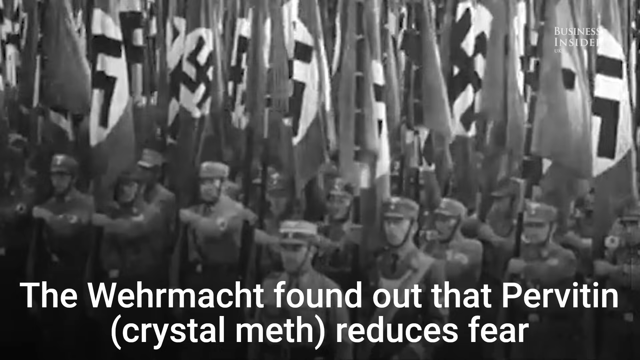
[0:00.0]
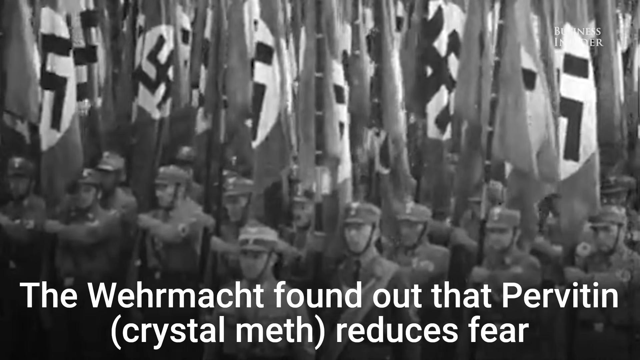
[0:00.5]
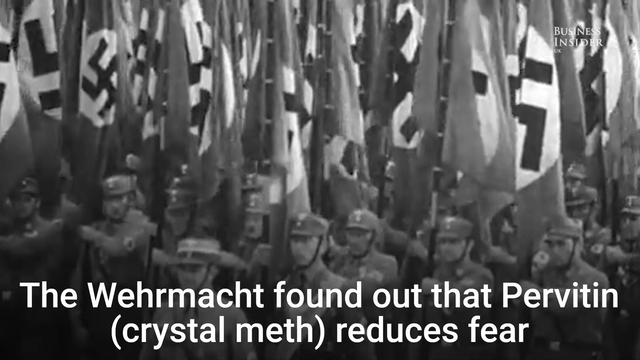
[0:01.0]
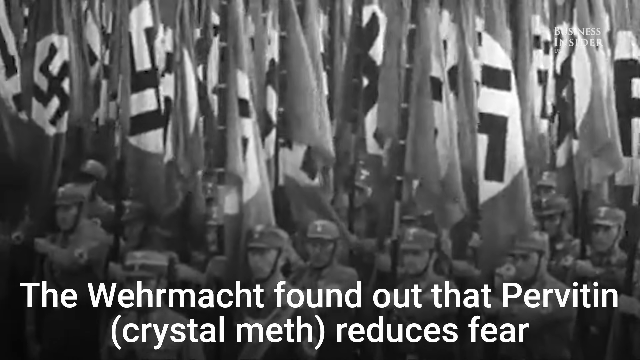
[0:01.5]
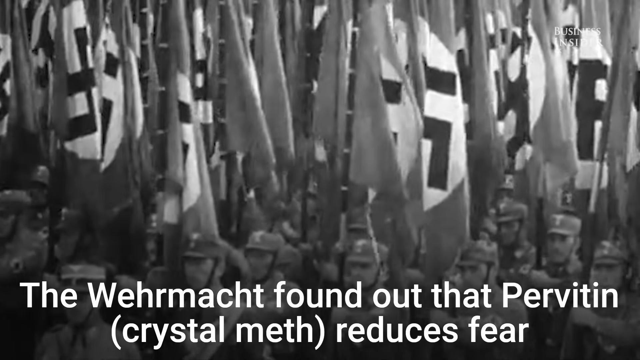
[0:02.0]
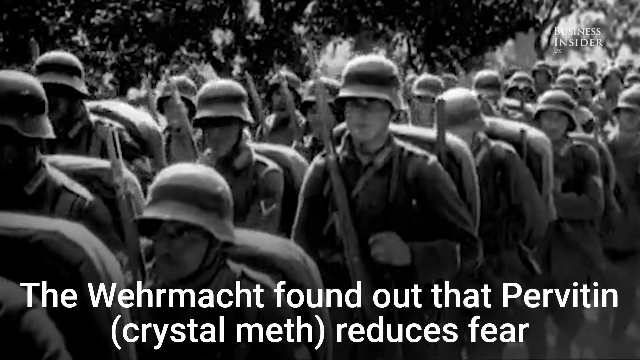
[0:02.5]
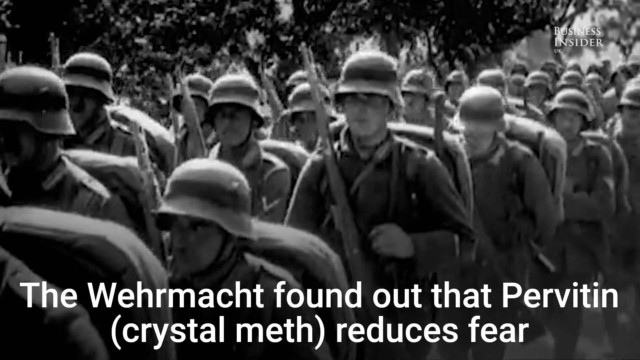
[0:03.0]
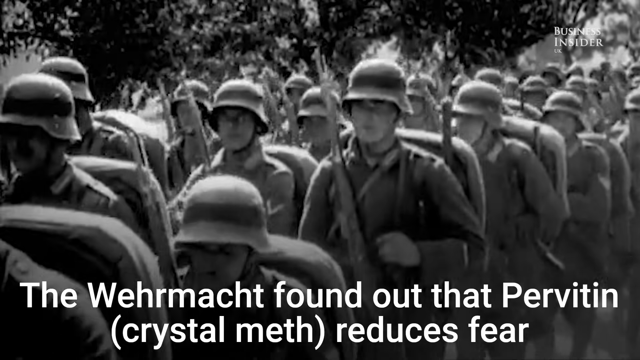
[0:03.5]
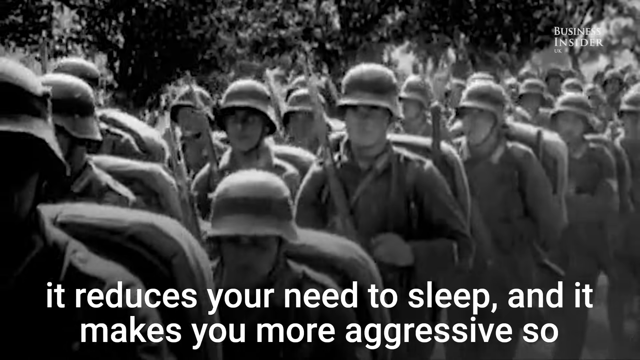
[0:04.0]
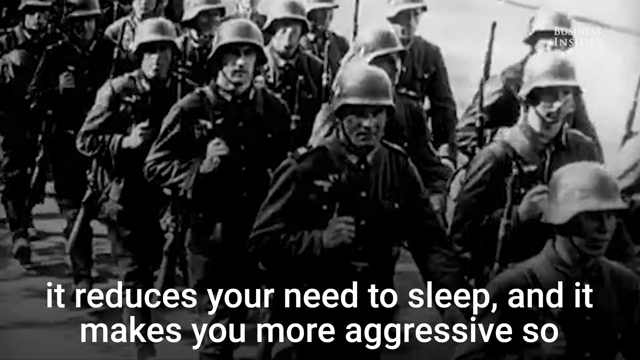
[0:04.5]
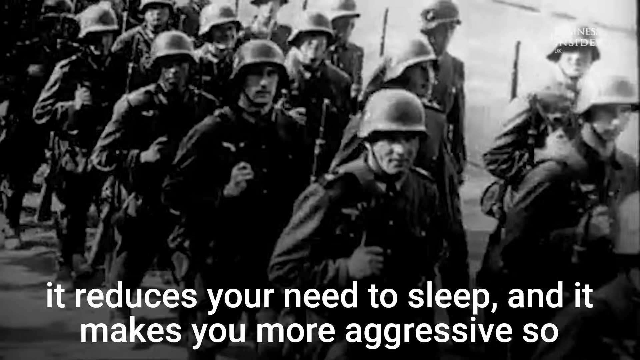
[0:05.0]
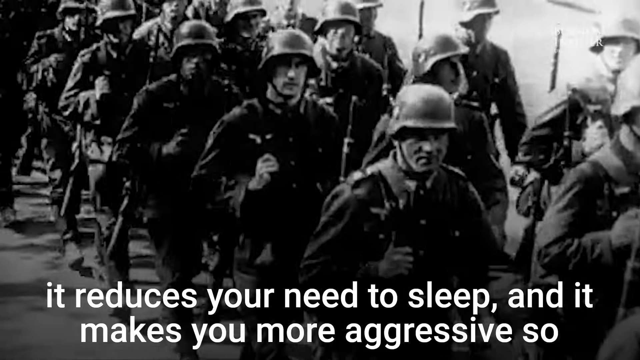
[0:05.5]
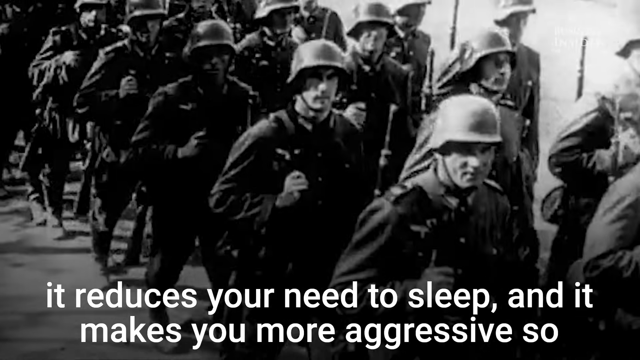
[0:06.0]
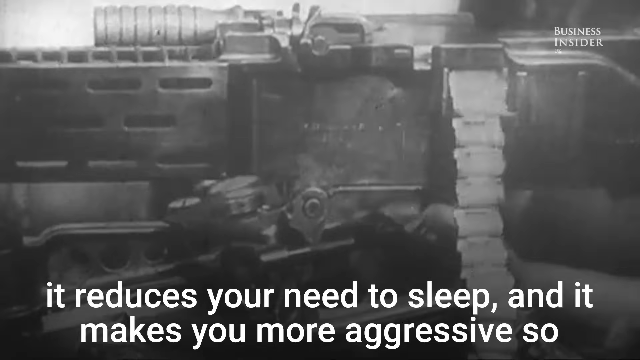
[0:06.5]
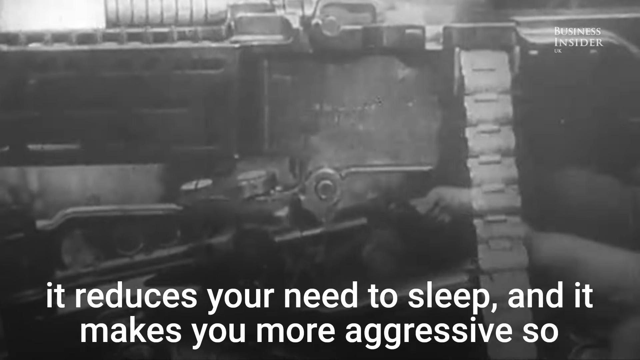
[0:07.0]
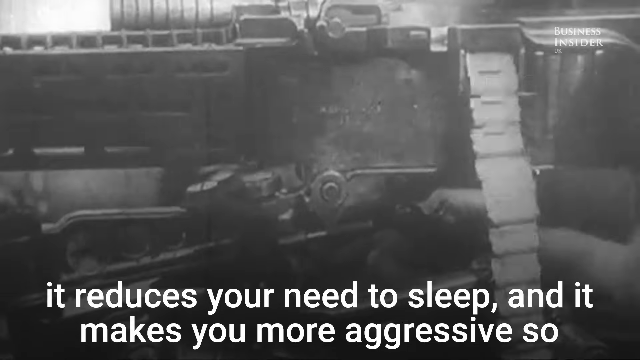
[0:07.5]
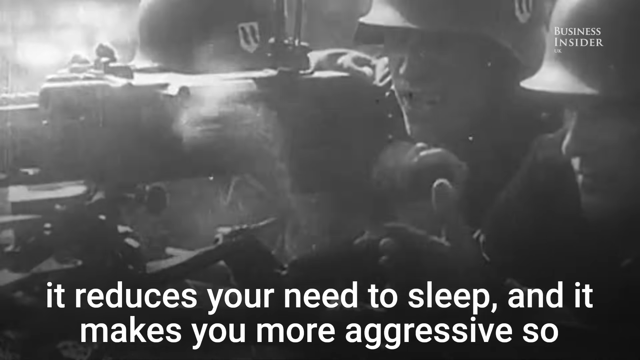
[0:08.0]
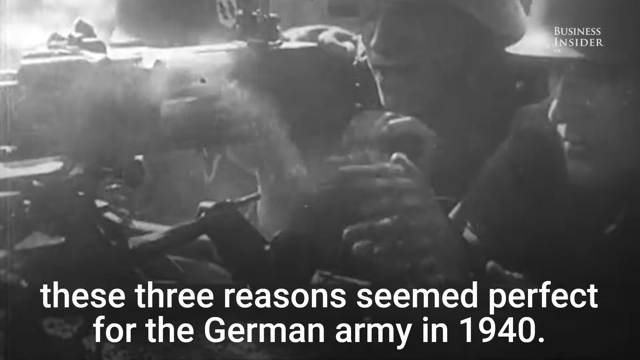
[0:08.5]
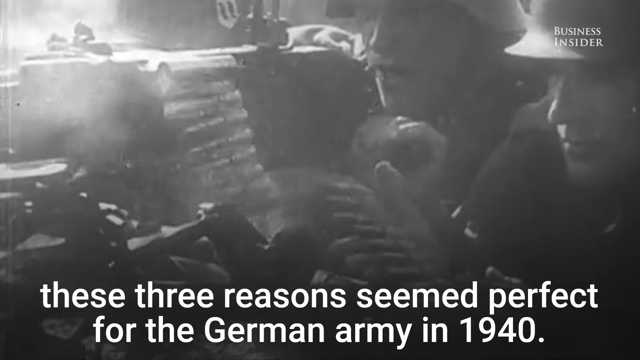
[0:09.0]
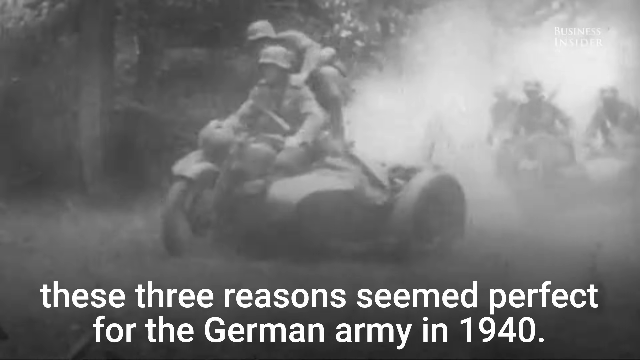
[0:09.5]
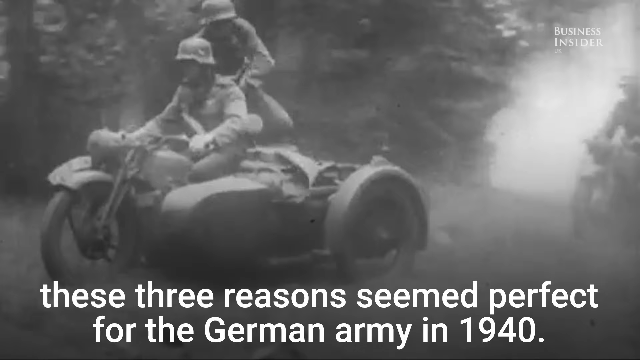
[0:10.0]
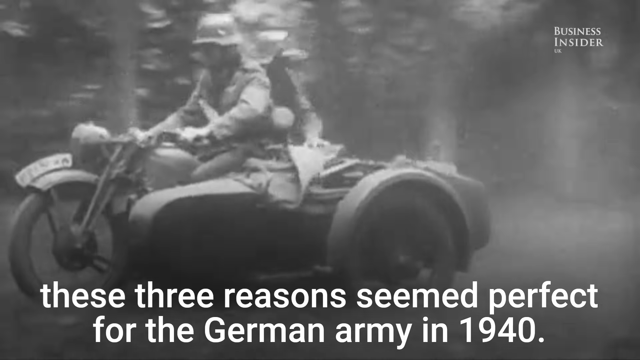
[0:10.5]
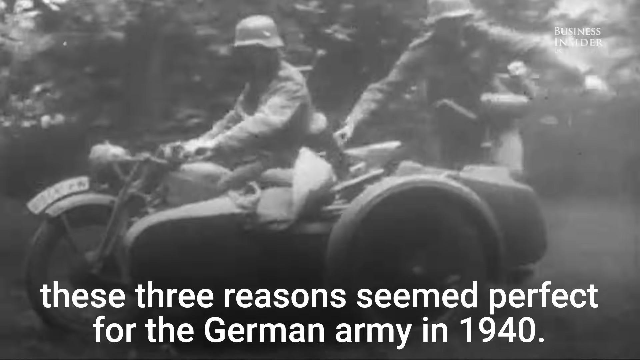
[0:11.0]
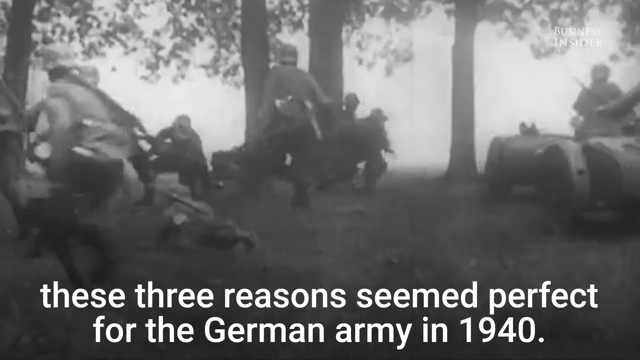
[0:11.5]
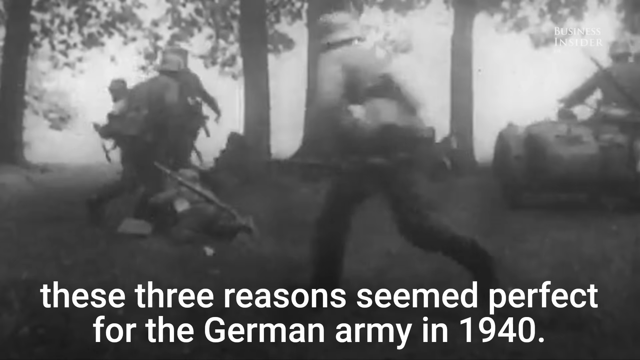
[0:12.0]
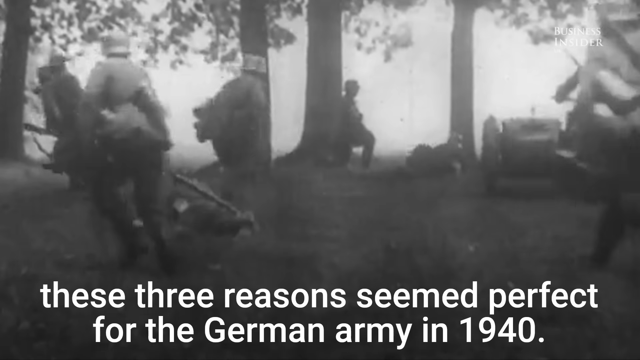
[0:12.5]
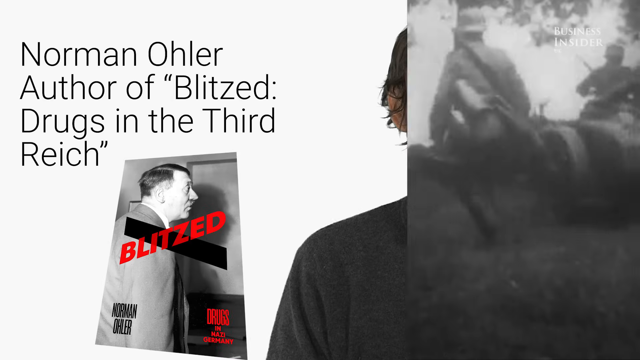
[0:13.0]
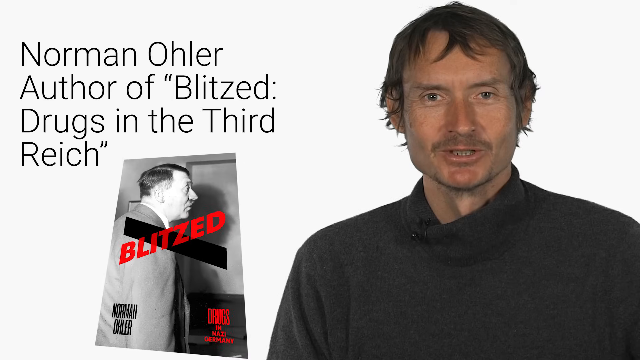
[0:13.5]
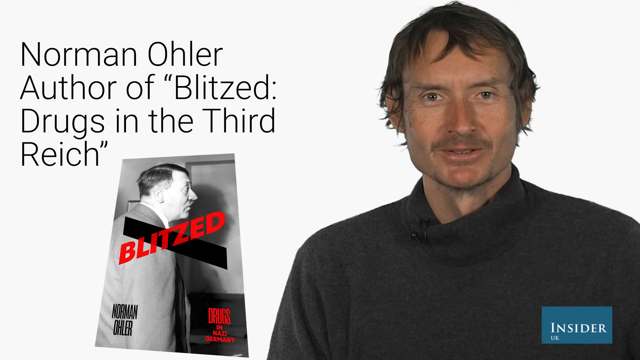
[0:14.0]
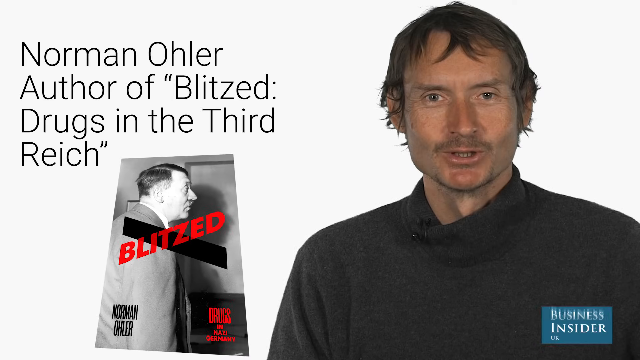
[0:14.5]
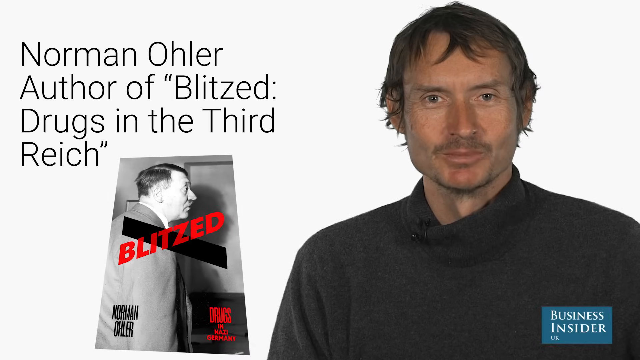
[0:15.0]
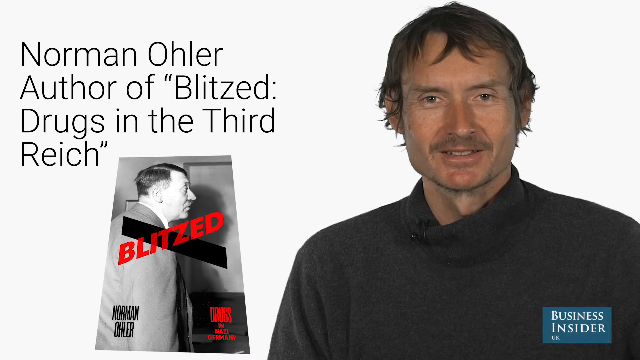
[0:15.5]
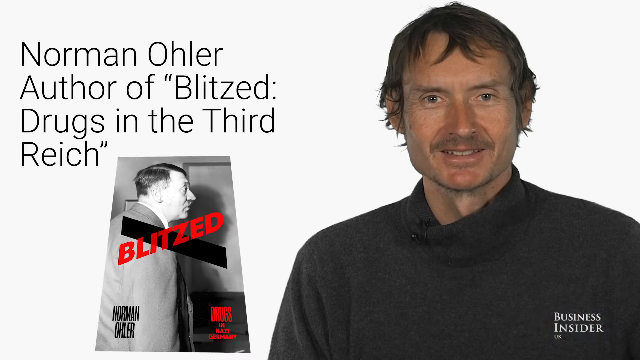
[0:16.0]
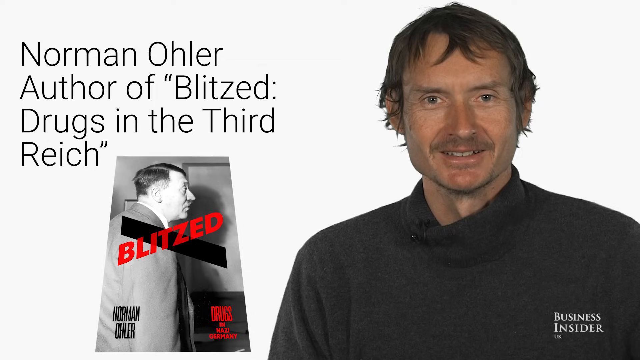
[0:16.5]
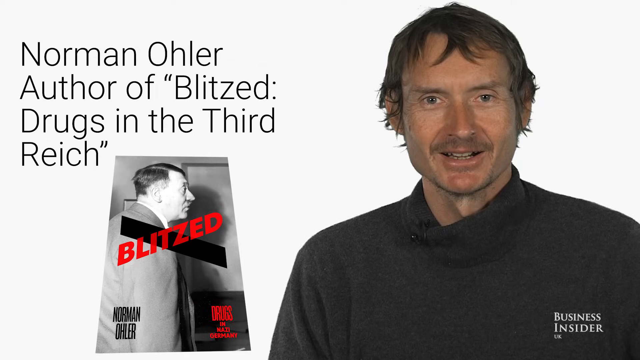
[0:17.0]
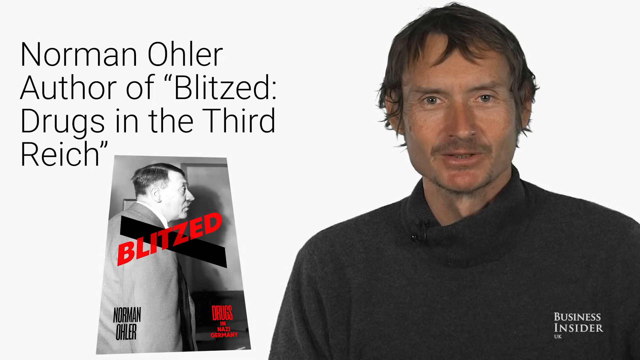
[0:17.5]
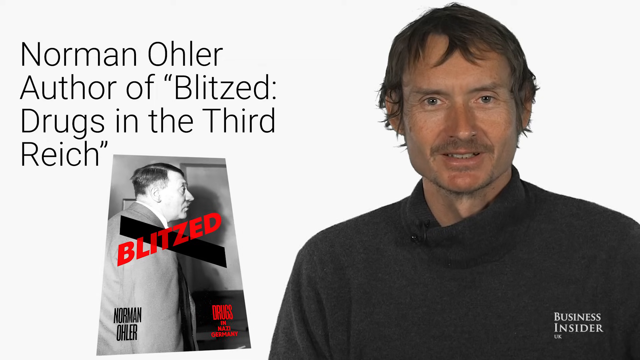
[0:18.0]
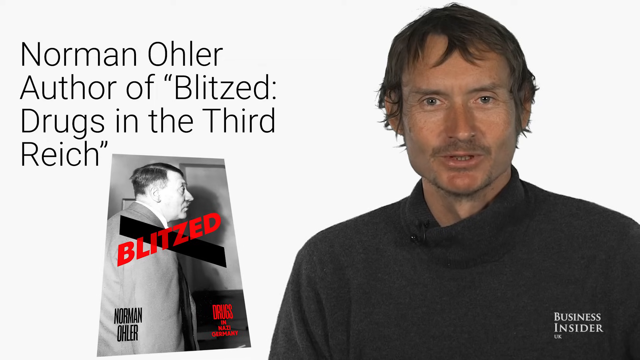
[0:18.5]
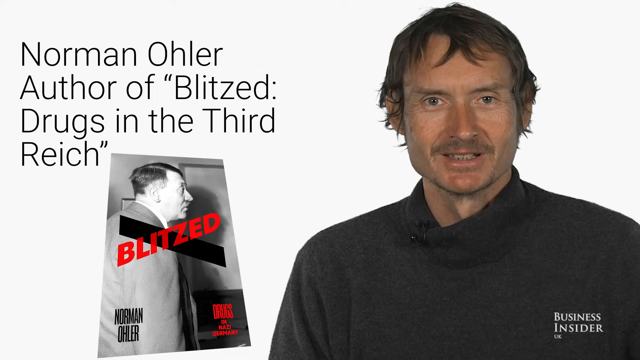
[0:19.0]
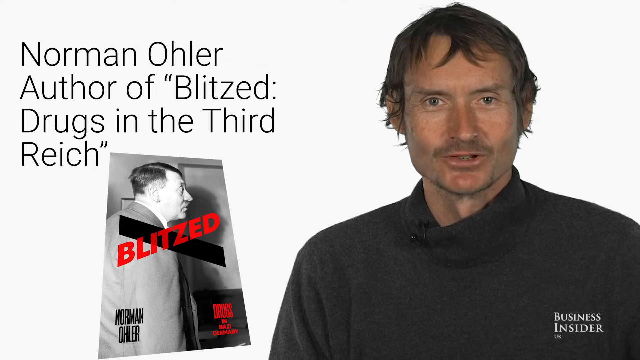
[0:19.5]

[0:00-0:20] What looks to be a Nazi army goes down a line with big flags held right beside them and up high. The flags bear the Nazi symbol on a white dot background; their color can't really be made out. The flags are all folded, so only half of any one symbol is visible. Text at the bottom, apparently from a history-channel-type piece, includes "reduces fear, reduces your need to sleep, and makes you more aggressive. These three reasons seem perfect for the German army in 1940." The video then cuts to a man in full color who looks like the one presenting this history segment or documentary.